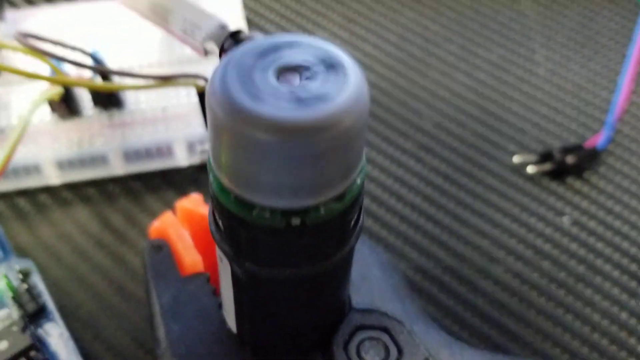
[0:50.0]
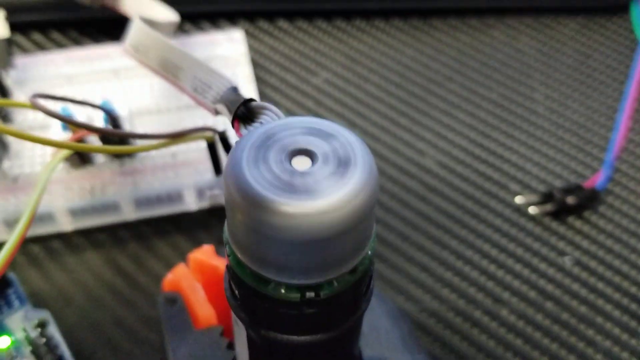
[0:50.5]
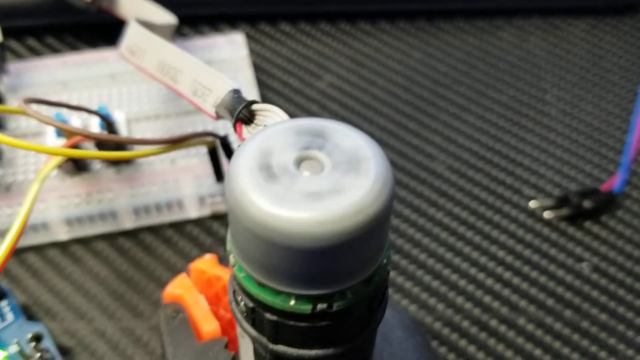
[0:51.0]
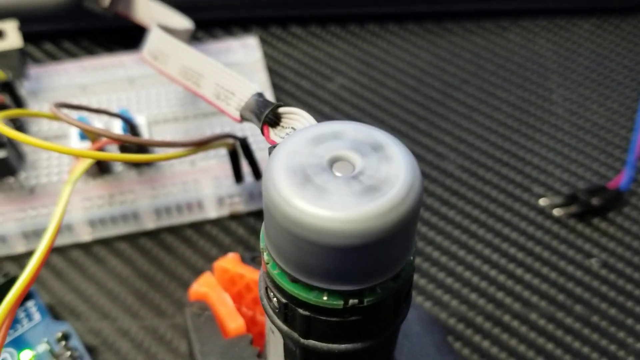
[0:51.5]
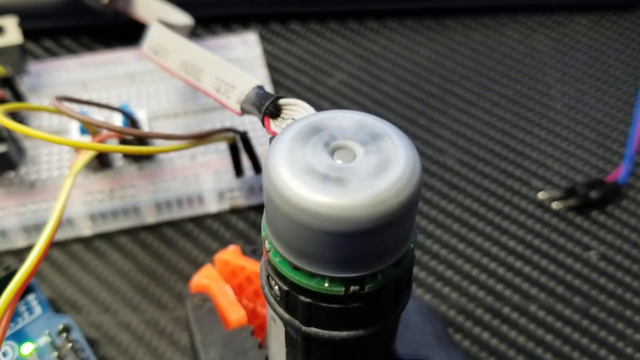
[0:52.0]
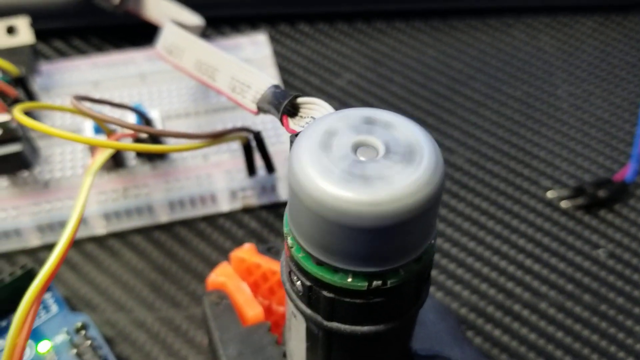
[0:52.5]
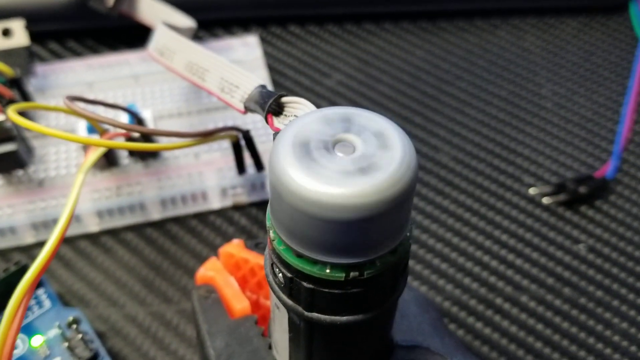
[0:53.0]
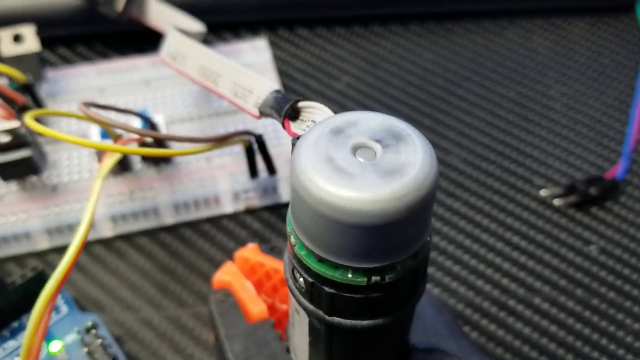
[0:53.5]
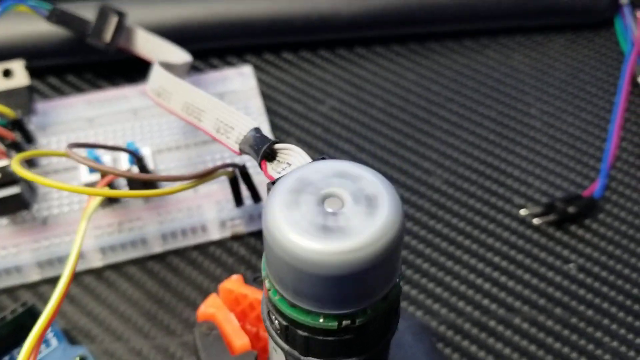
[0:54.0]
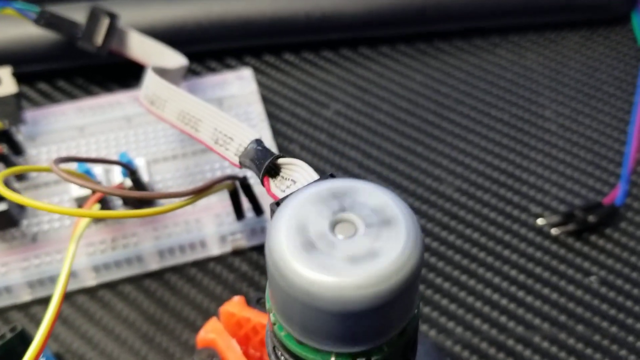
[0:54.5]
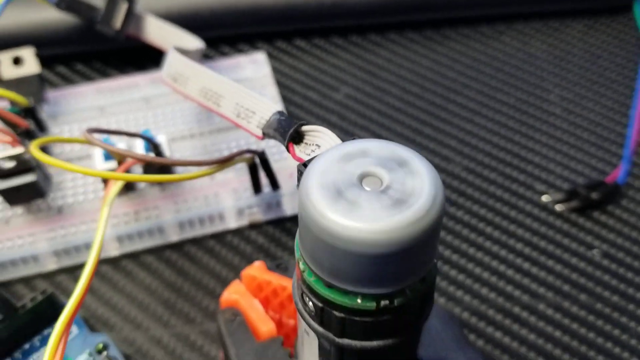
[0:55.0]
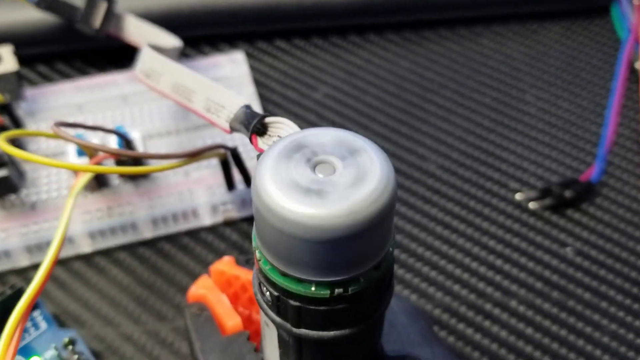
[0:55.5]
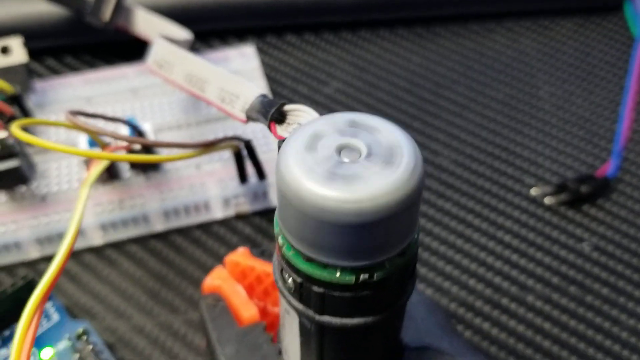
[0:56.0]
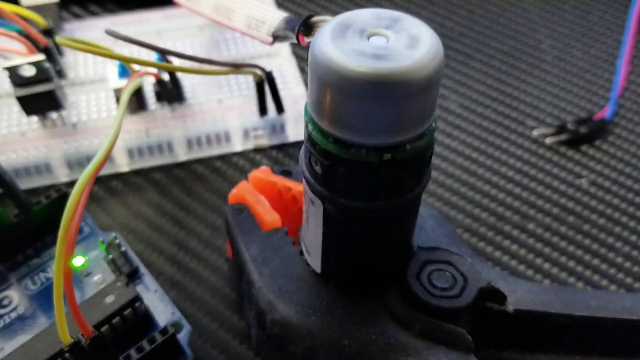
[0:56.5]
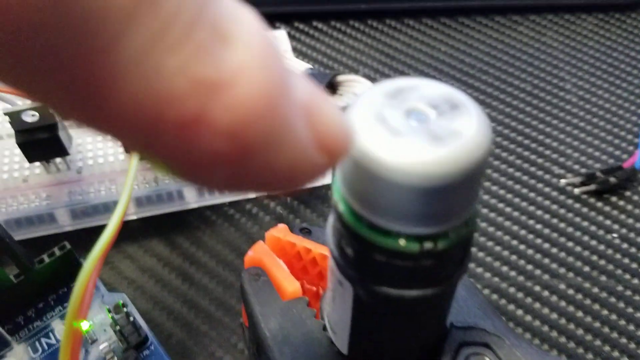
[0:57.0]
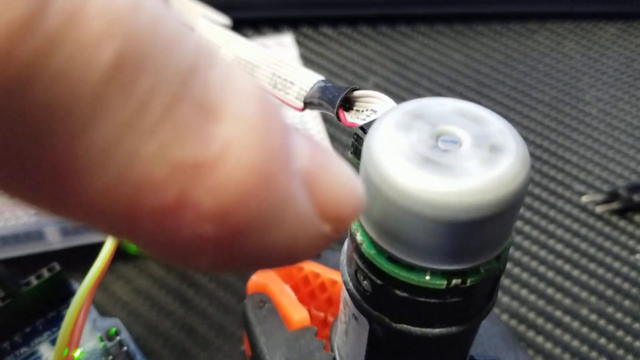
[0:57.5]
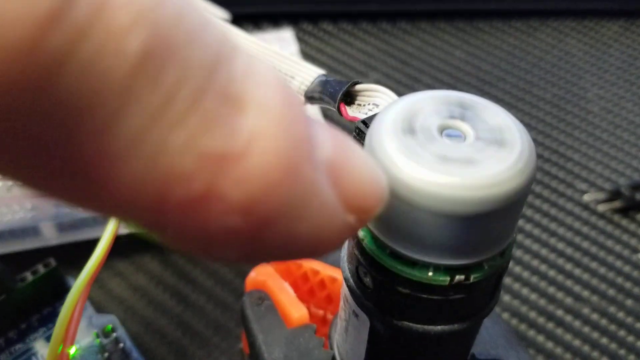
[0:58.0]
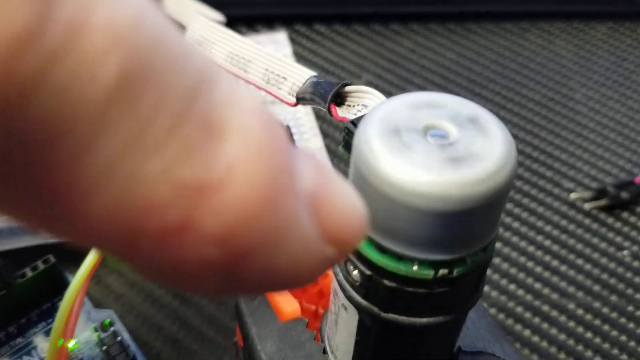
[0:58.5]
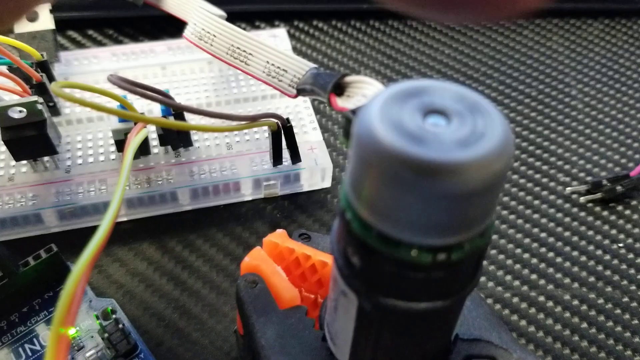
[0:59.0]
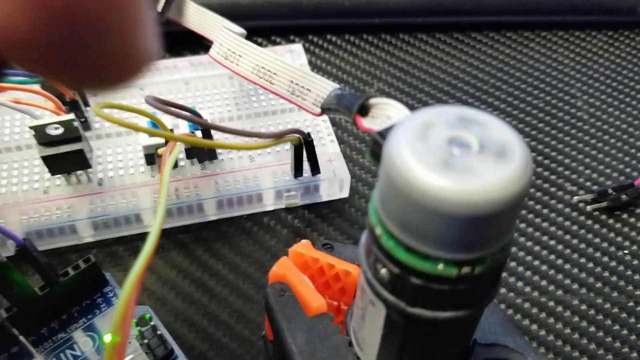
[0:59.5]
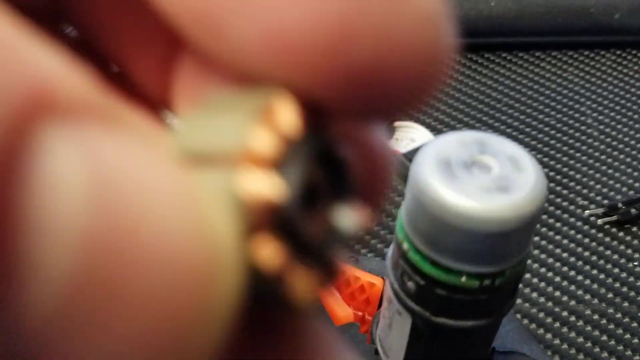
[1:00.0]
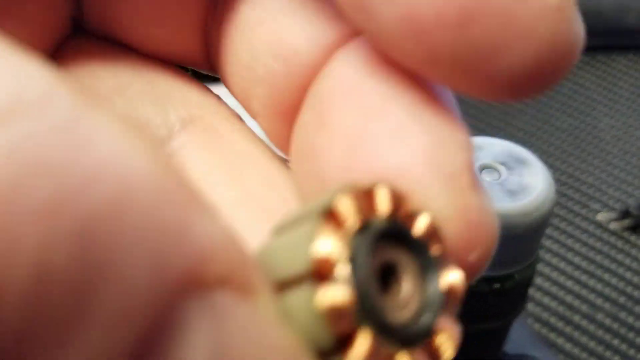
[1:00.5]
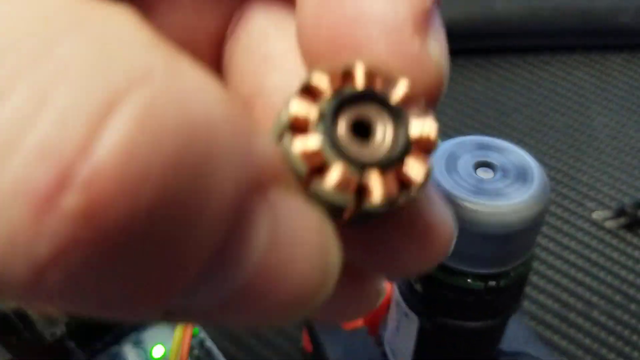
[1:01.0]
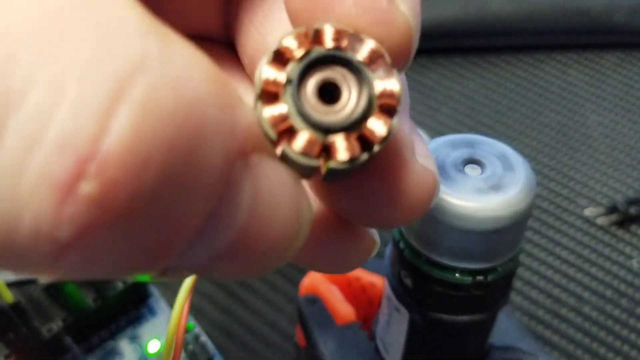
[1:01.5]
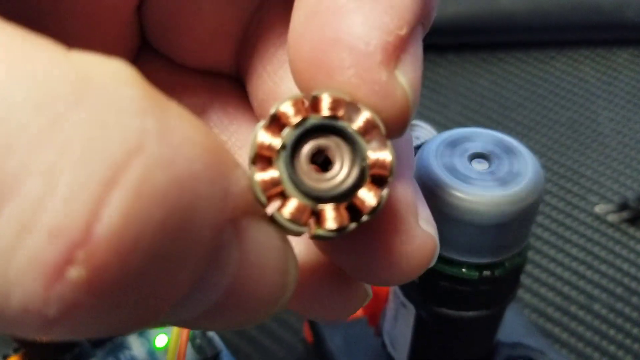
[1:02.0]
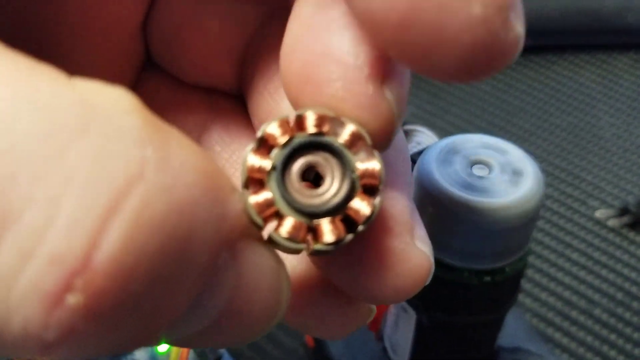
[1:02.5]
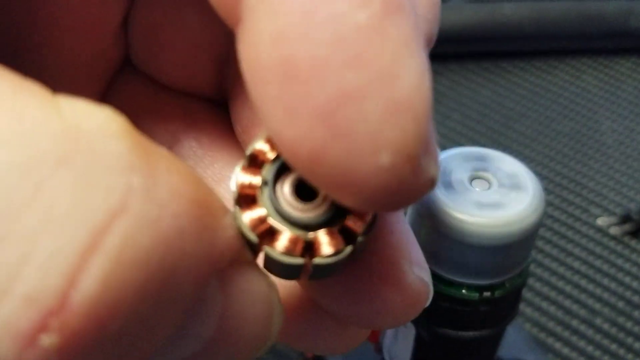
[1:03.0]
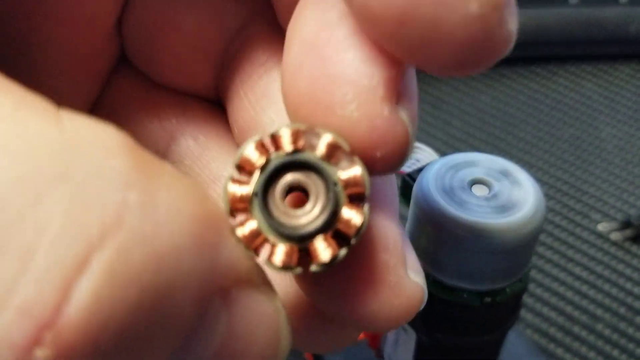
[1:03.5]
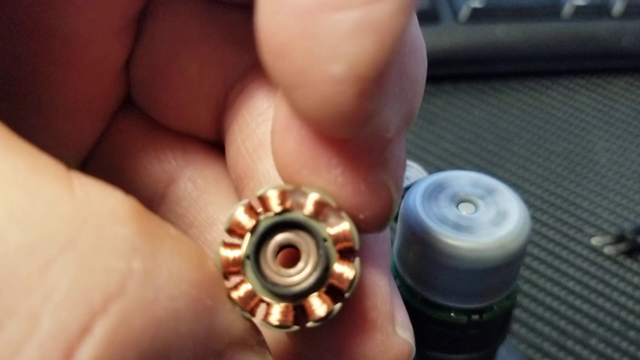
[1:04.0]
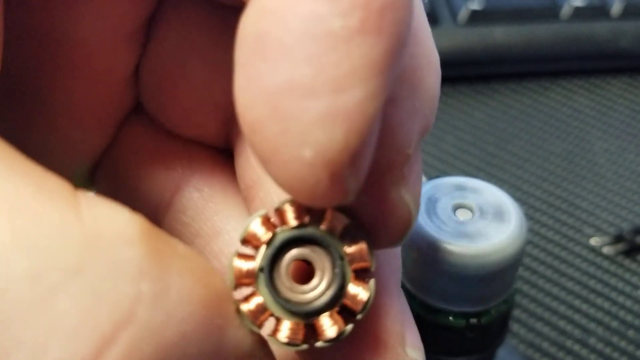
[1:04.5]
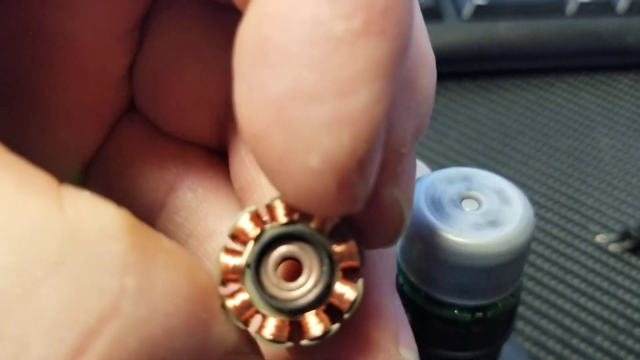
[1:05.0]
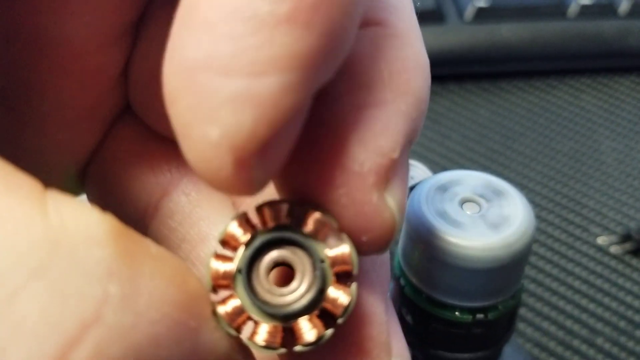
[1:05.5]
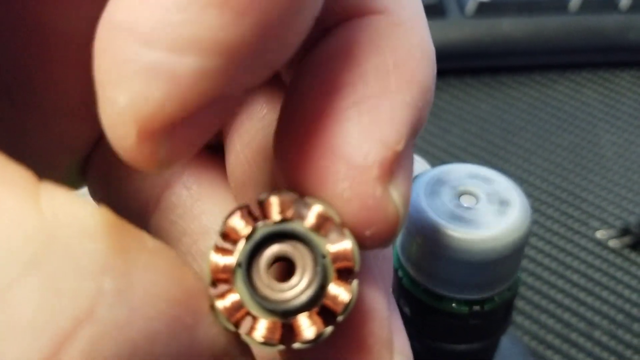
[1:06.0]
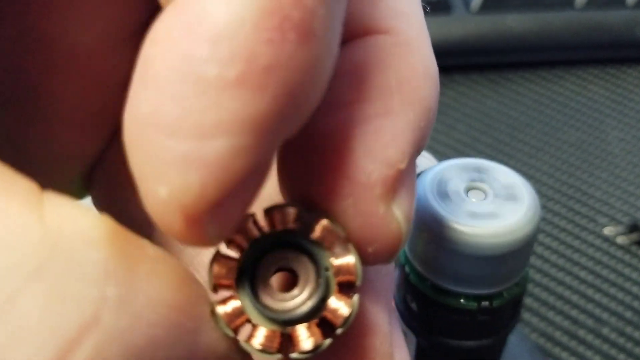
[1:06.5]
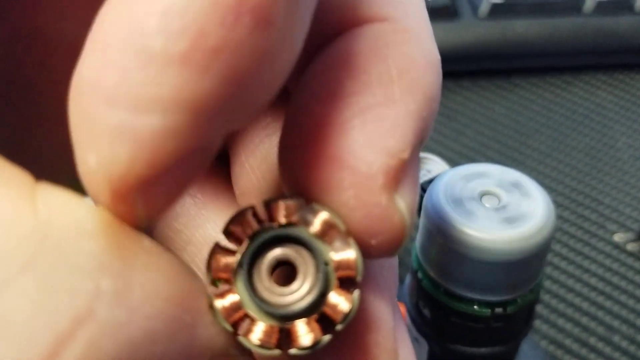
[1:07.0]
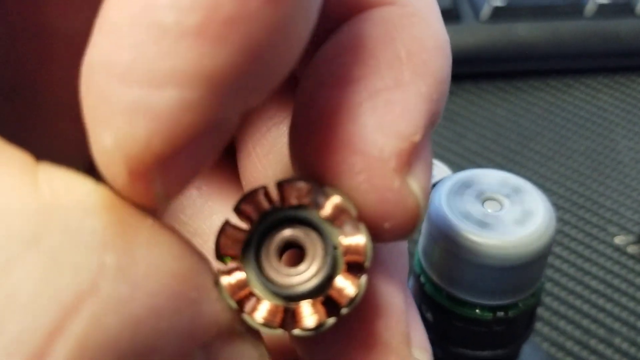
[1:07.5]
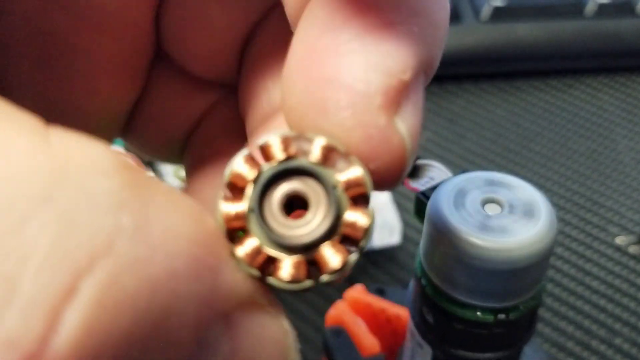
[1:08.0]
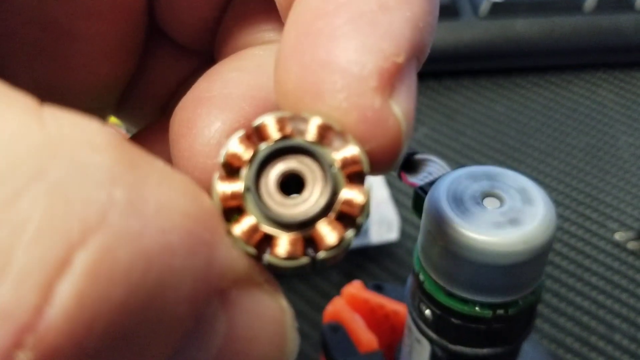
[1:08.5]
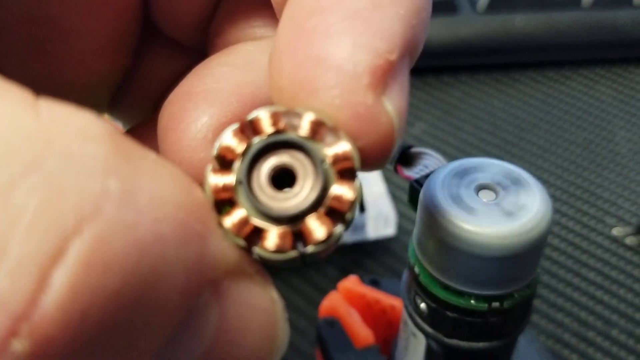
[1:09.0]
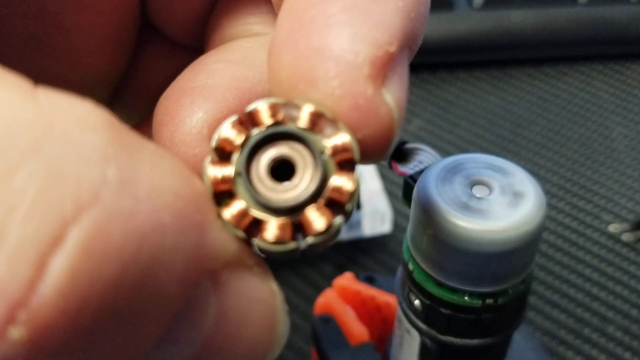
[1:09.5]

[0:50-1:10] A device with a white, cylindrical rotating top is the focus of the shot, the top spinning very rapidly counterclockwise. The device is propped up by a pair of black pliers with orange tips, resting on top of a black table with a textured surface. A hand at the top of the shot moves erratically up and down. A finger then appears near the rotating device and points at it. The hand then displays a device prominently to the camera: it appears to have copper, has various grooves, is cylindrical in shape, and has a hole in the middle.